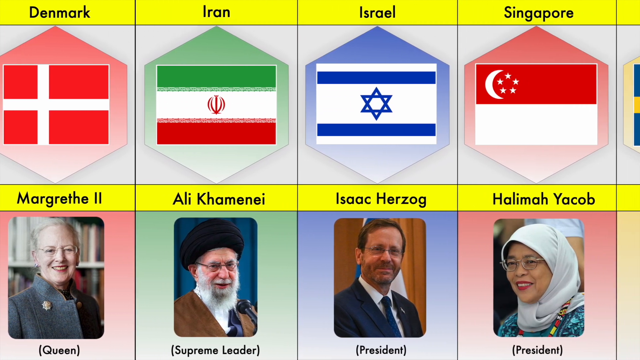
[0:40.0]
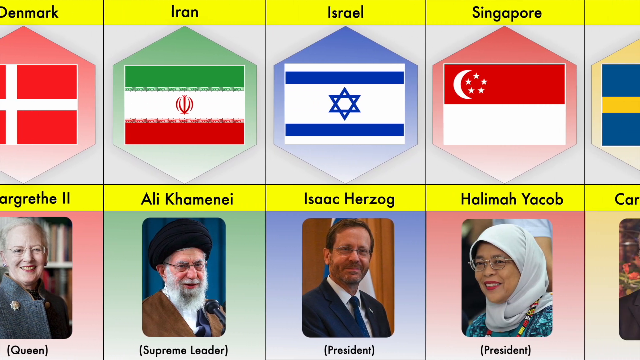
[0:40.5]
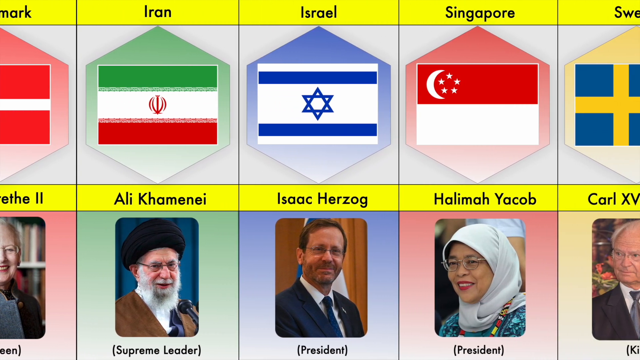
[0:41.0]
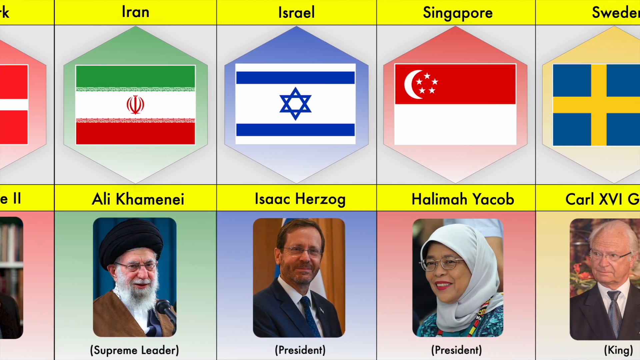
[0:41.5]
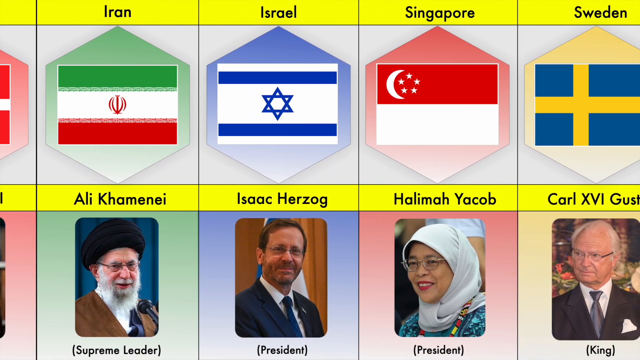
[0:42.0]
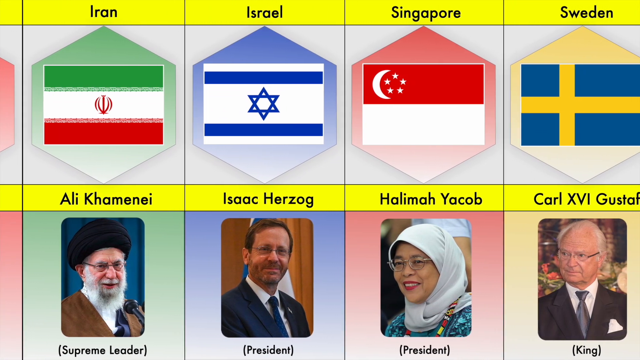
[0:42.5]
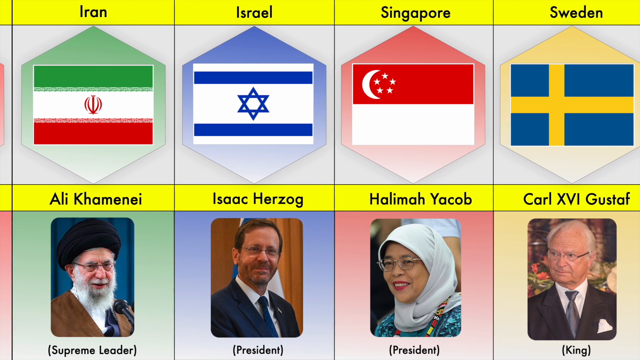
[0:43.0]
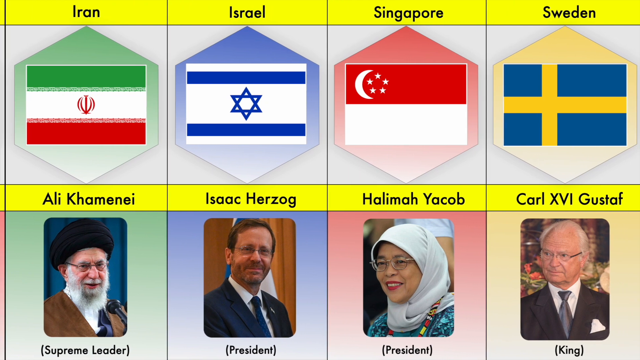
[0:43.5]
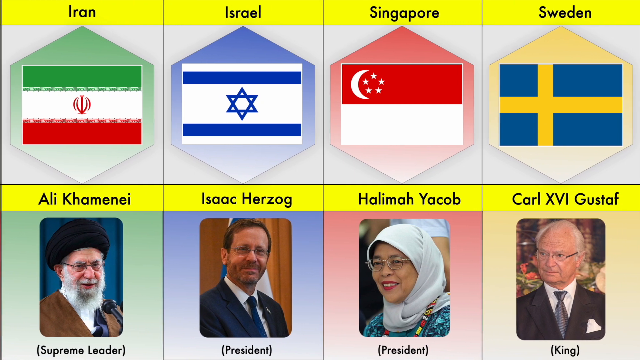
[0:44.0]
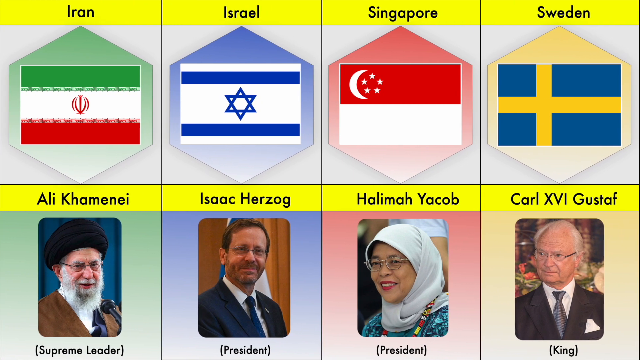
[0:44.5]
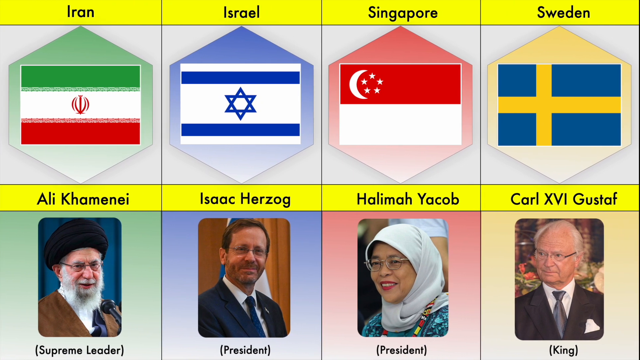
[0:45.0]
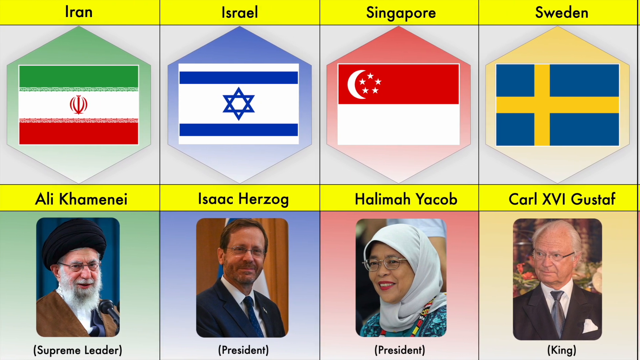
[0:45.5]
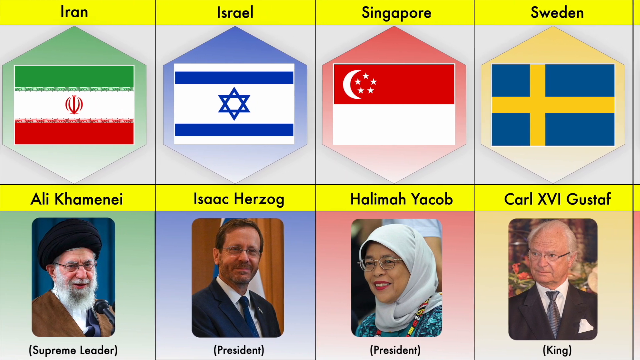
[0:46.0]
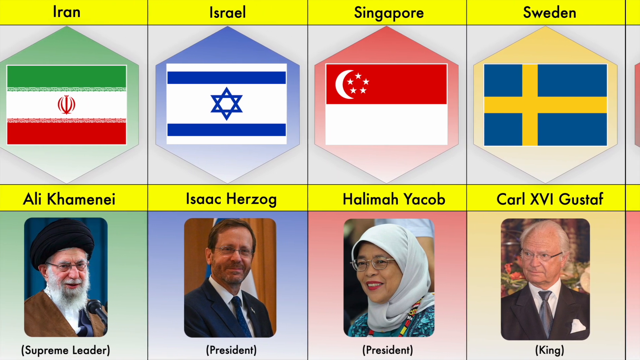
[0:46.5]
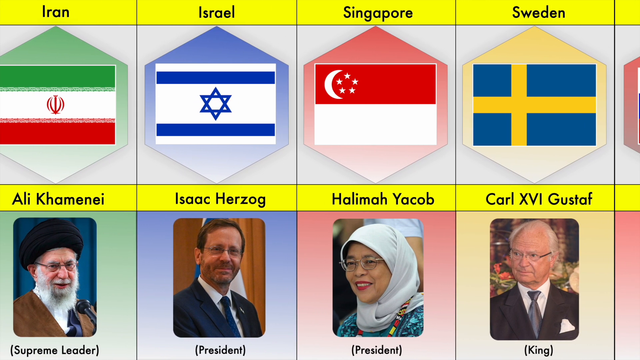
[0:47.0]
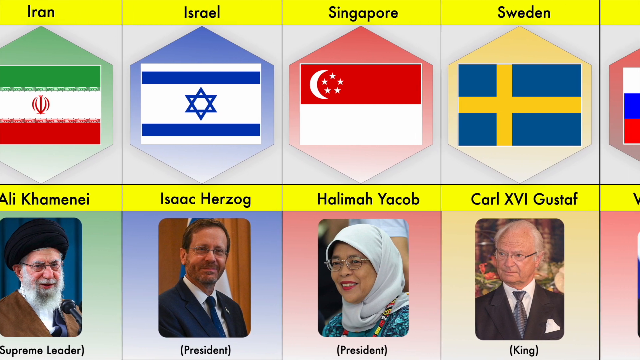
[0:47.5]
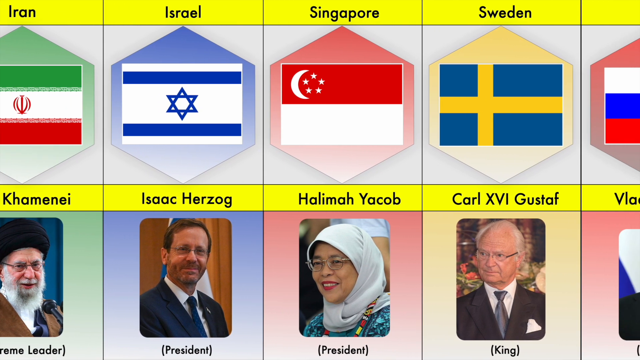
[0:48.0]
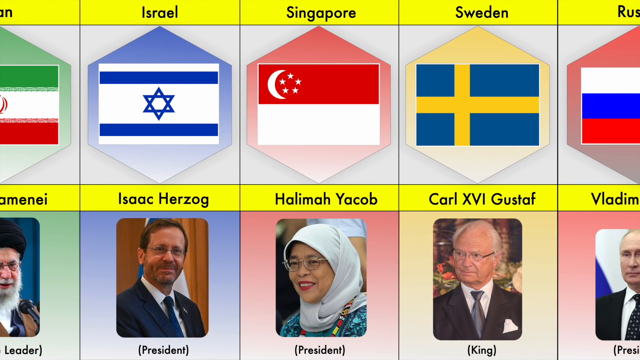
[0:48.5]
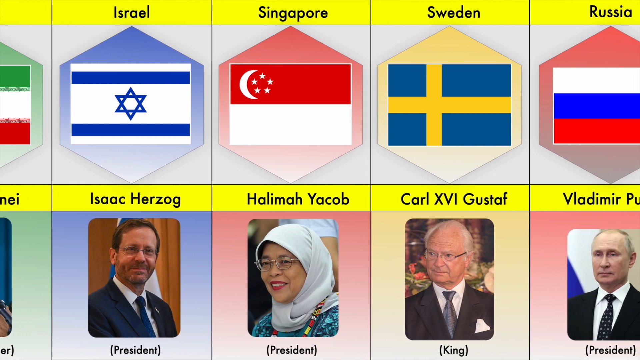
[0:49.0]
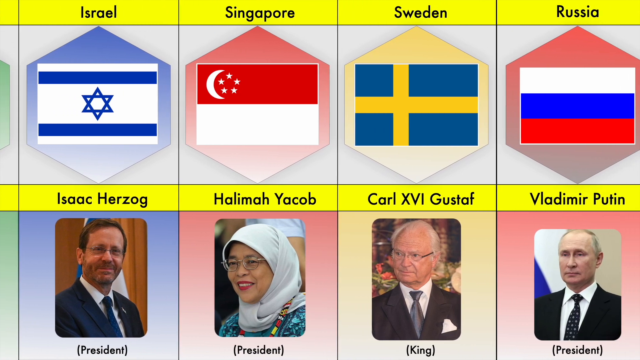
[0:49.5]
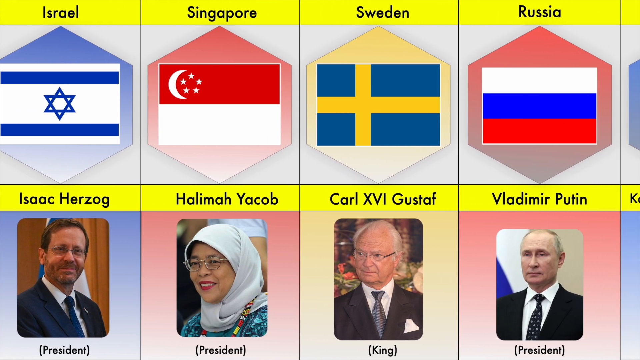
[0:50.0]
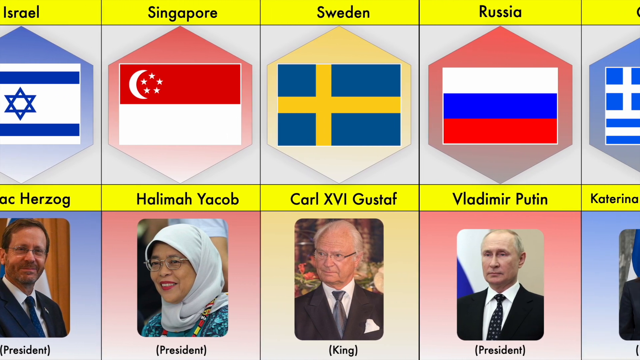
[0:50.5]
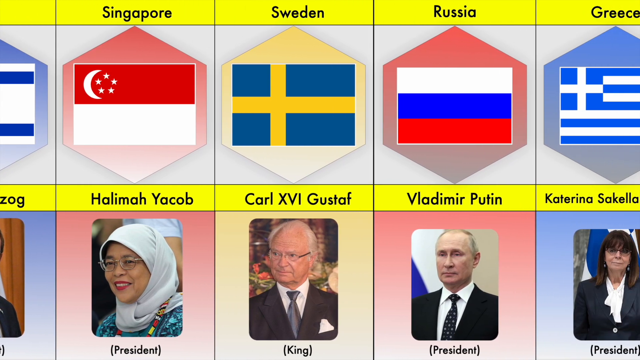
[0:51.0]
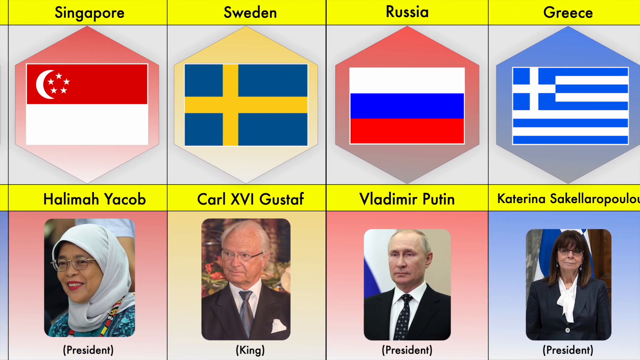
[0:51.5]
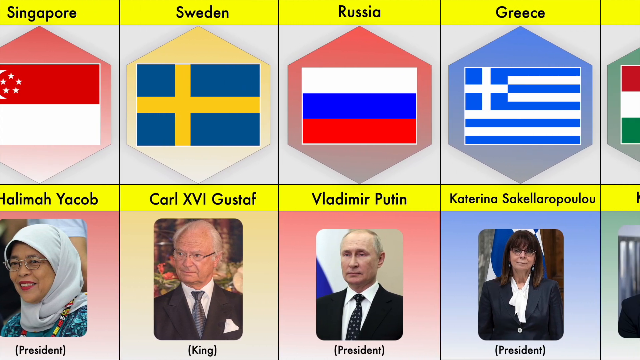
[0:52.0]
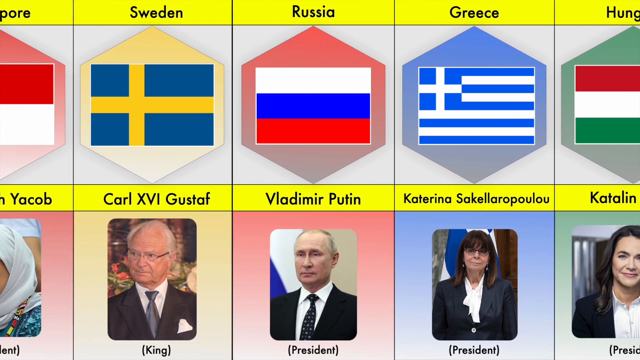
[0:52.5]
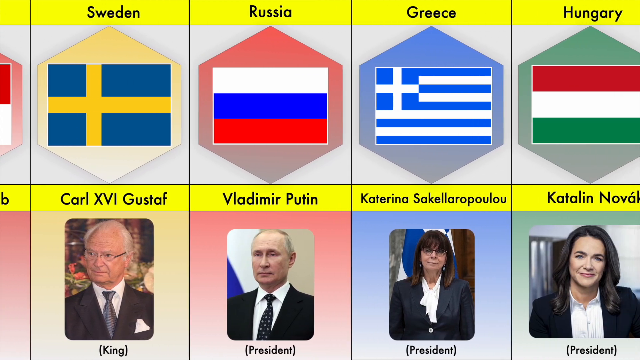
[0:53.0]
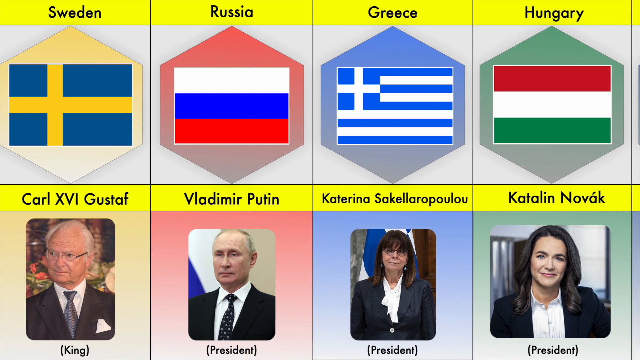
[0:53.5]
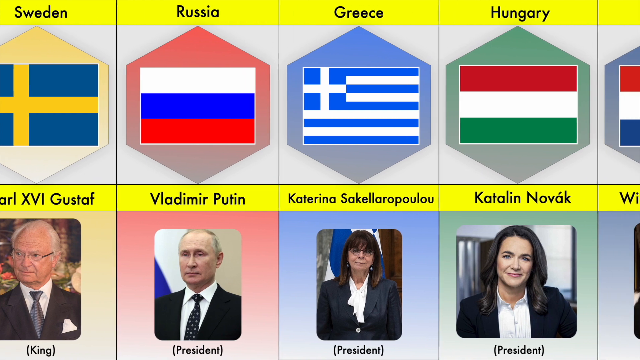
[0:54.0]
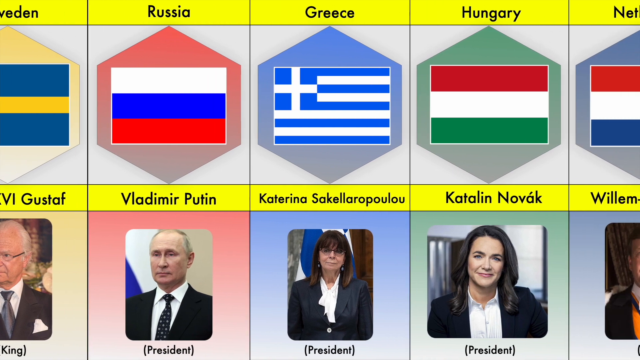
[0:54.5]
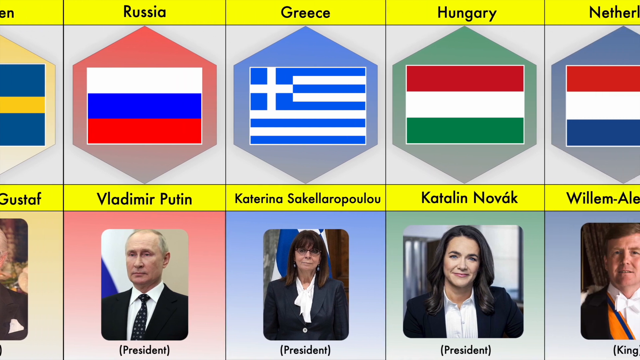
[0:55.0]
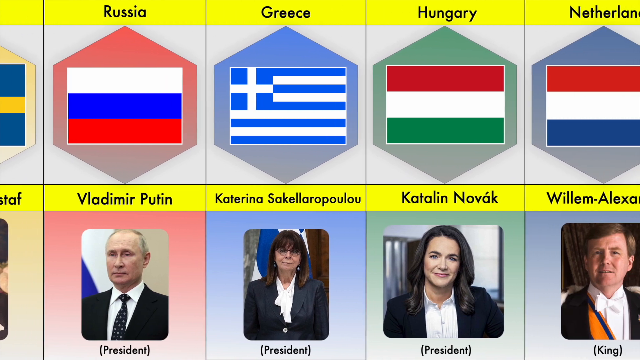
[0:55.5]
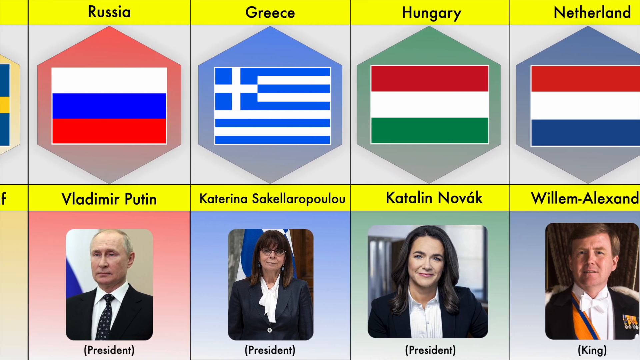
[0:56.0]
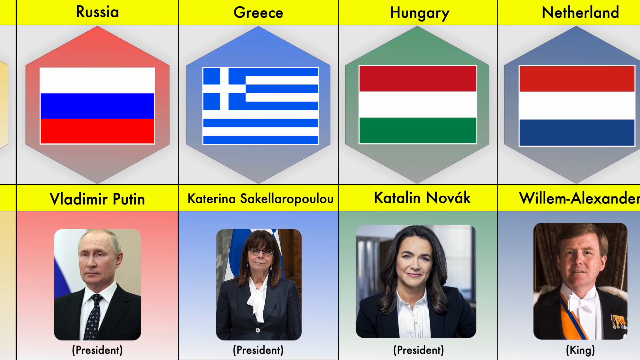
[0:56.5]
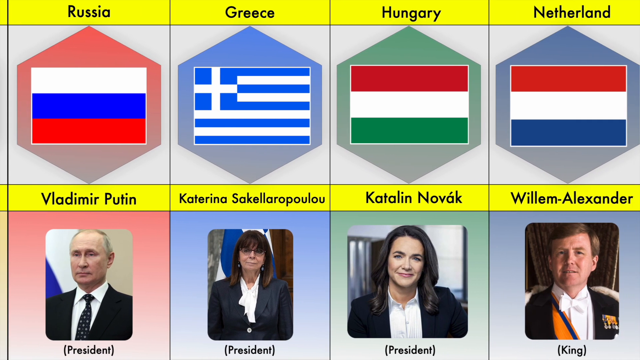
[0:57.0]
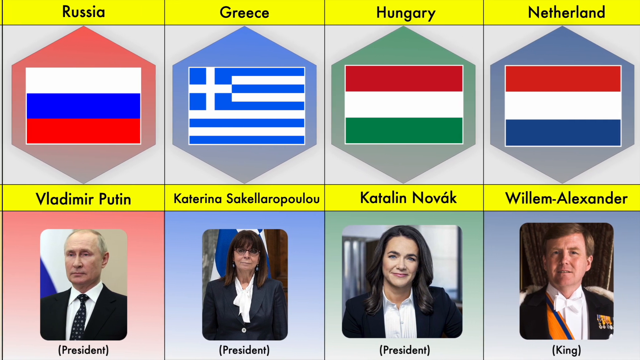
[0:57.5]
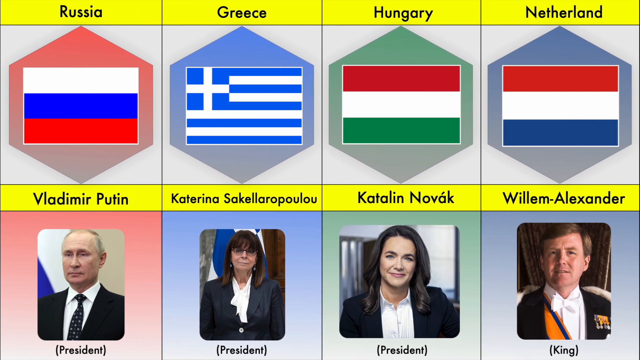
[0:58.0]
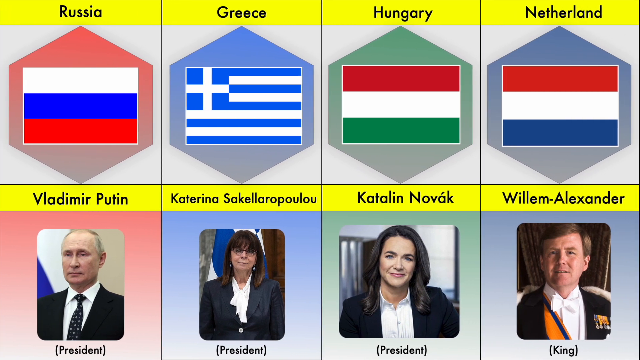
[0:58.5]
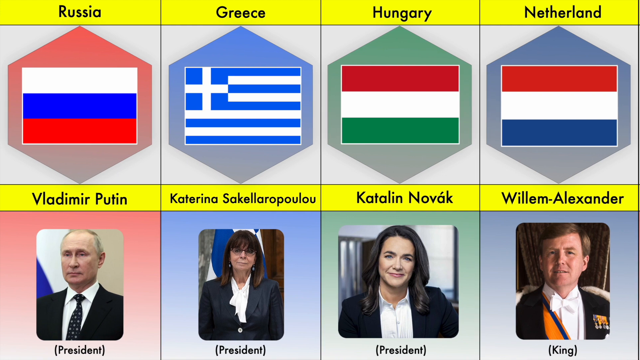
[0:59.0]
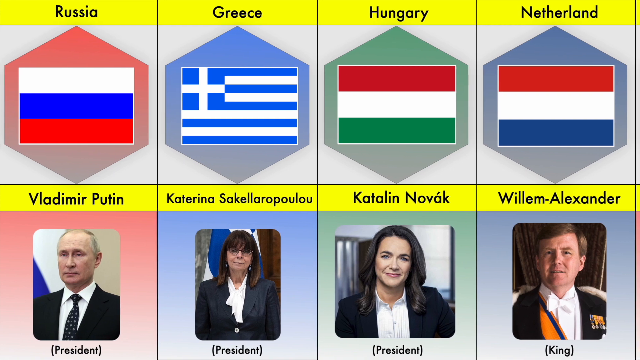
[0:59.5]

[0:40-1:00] A row of leaders appears only at the bottom of the screen. Most of them appear to be male, except for the president Malami Yaqob. They appear to be a mix of presidents, kings and prime ministers. The row appears to be moving from left to right, with some people leaving the shot and new people entering. The countries are shown across the top of the screen, and the names of the countries and the people are displayed over a yellow strip, clearly identifying each person with their country.